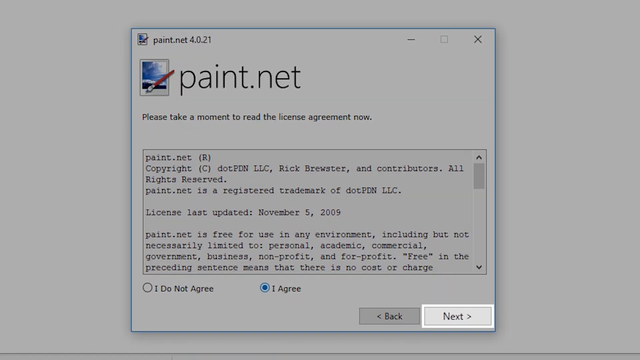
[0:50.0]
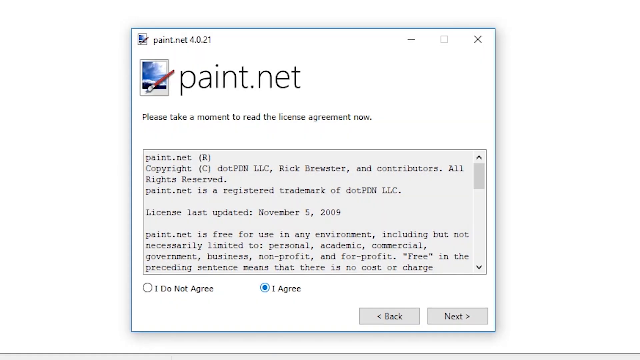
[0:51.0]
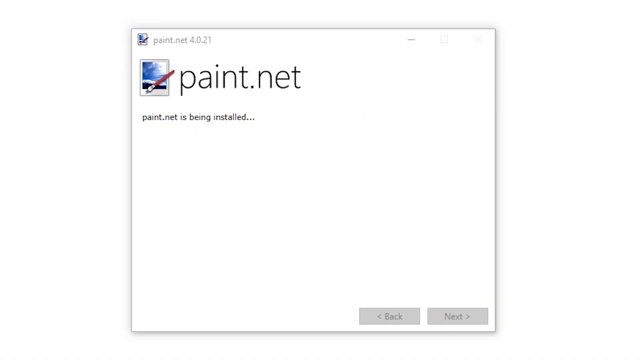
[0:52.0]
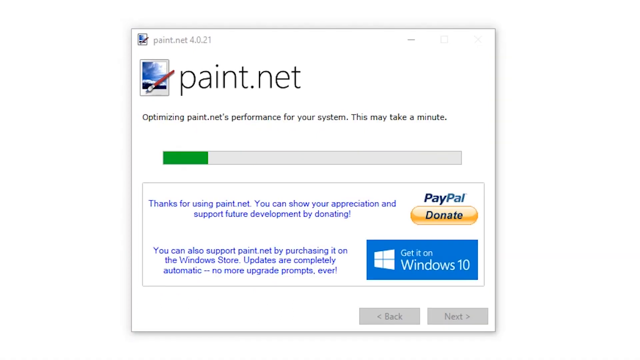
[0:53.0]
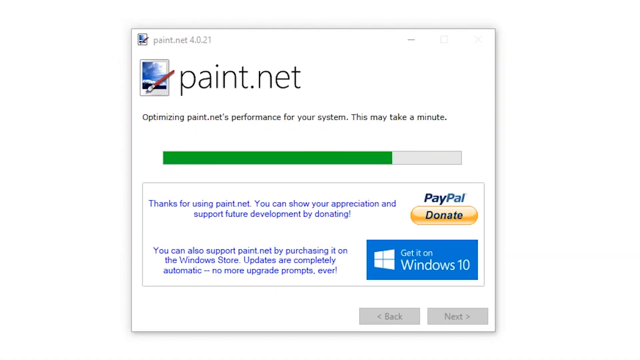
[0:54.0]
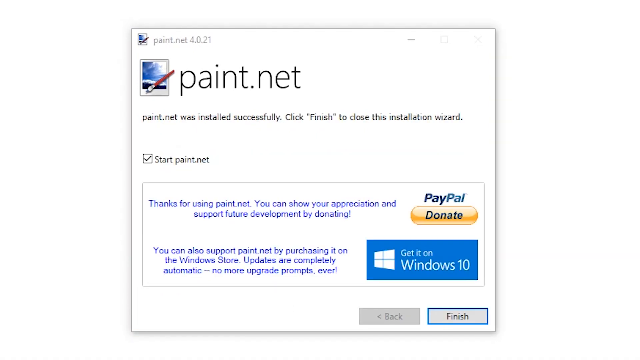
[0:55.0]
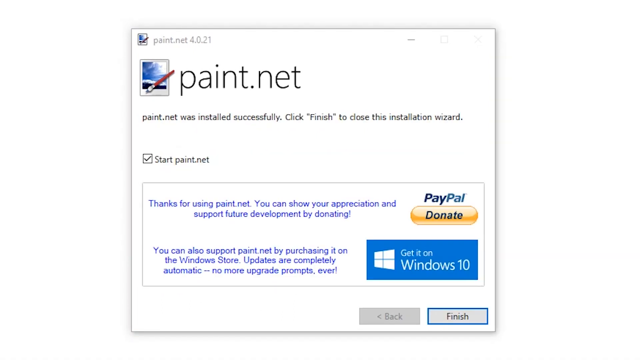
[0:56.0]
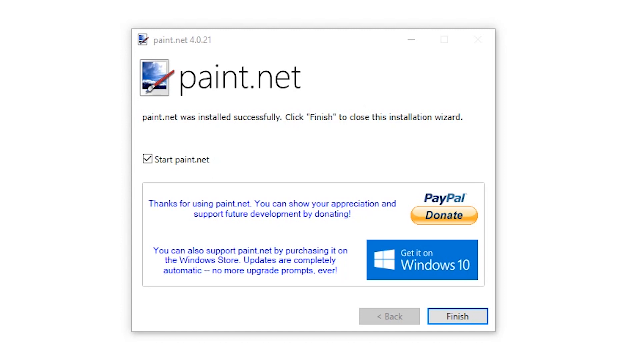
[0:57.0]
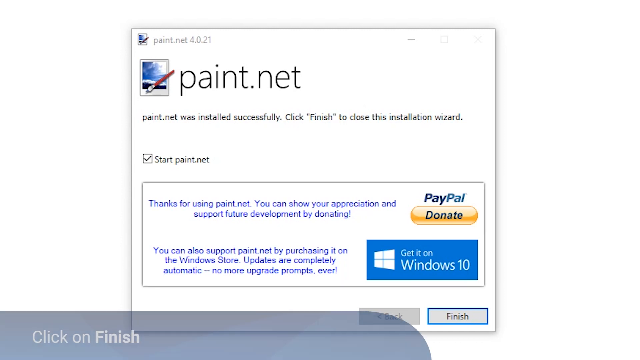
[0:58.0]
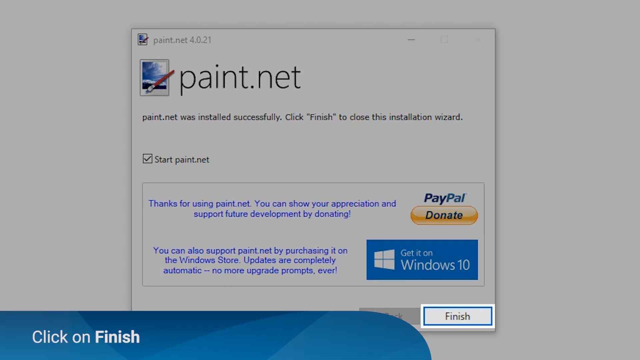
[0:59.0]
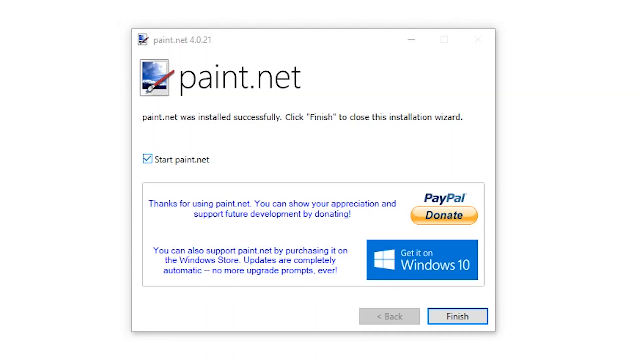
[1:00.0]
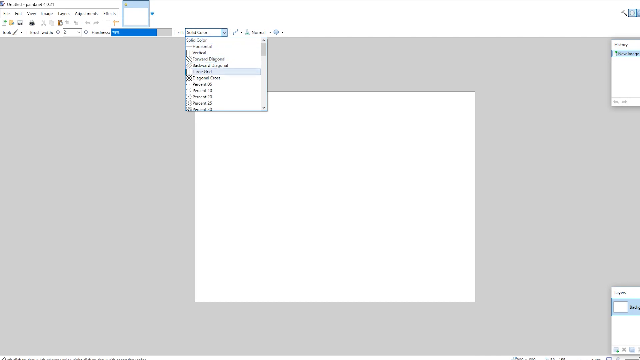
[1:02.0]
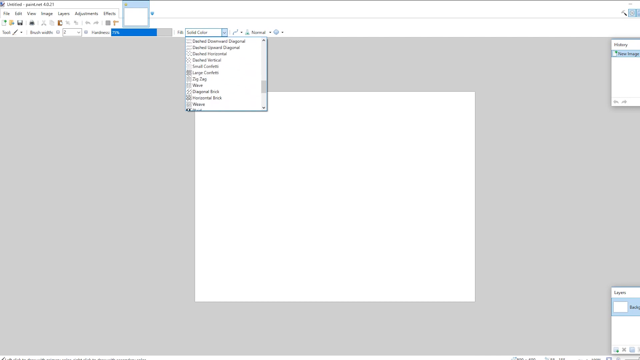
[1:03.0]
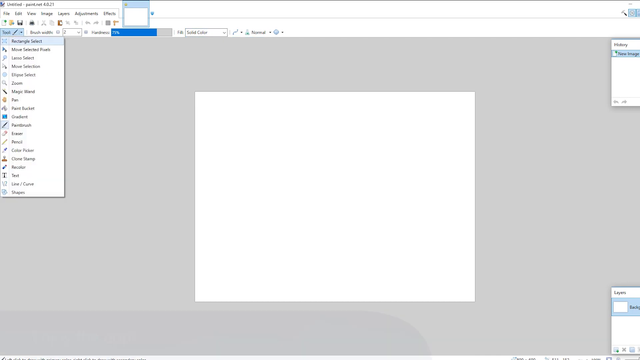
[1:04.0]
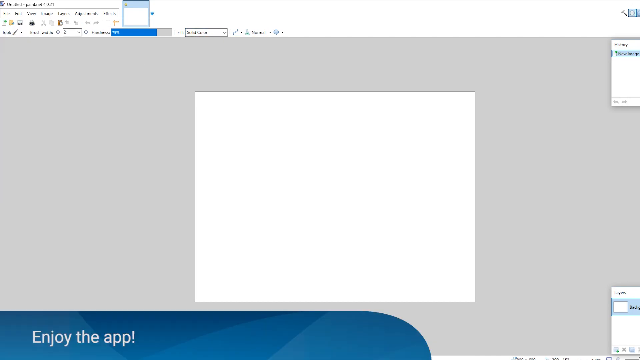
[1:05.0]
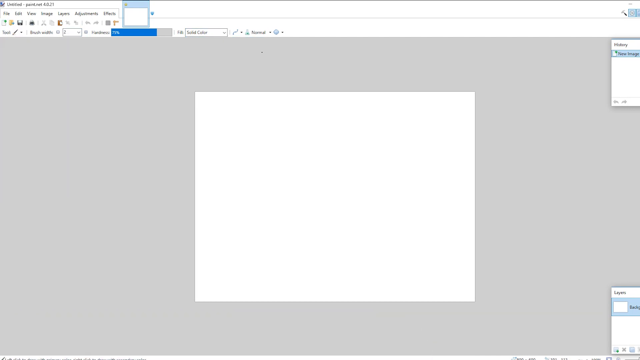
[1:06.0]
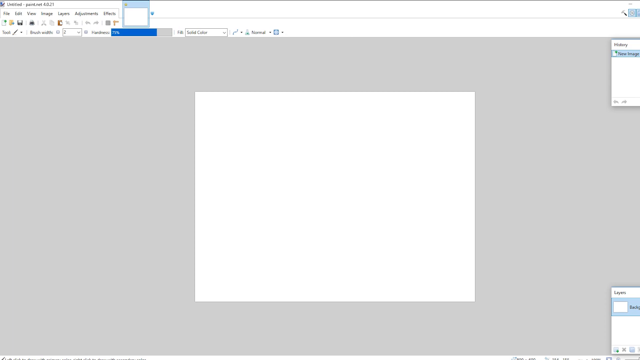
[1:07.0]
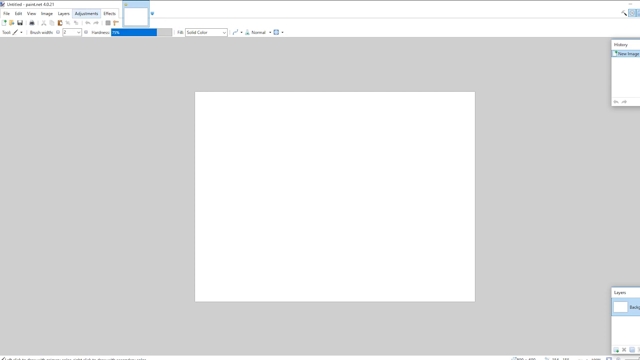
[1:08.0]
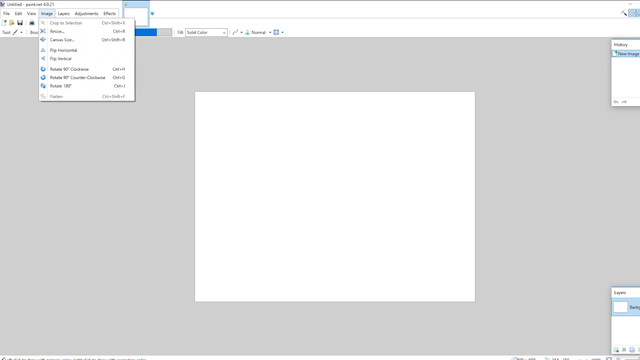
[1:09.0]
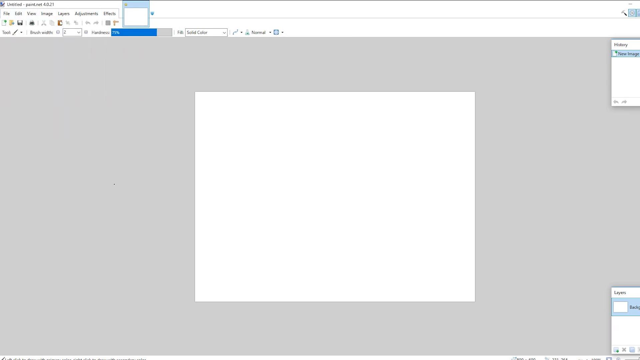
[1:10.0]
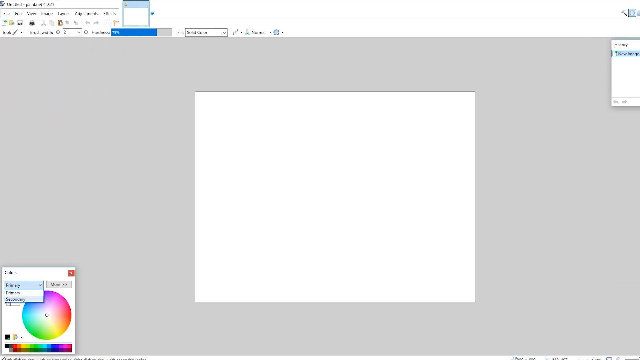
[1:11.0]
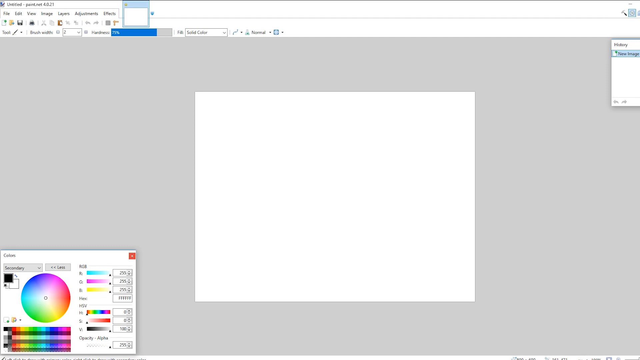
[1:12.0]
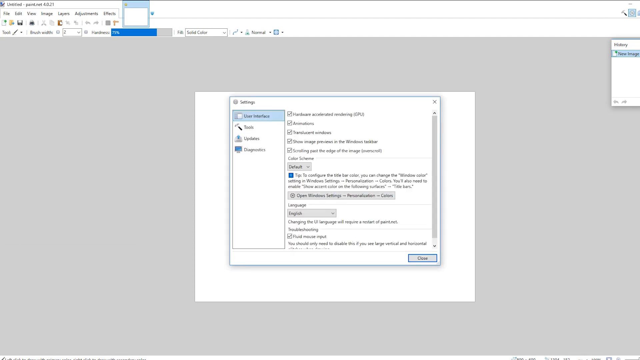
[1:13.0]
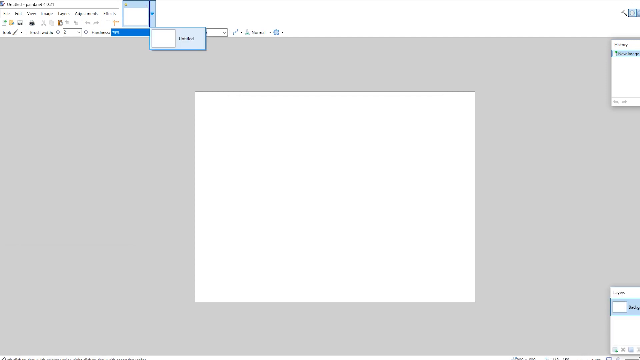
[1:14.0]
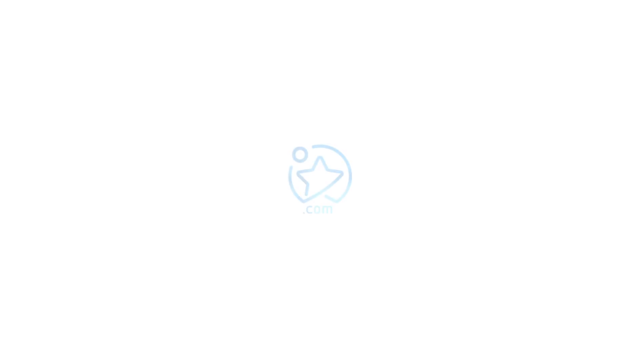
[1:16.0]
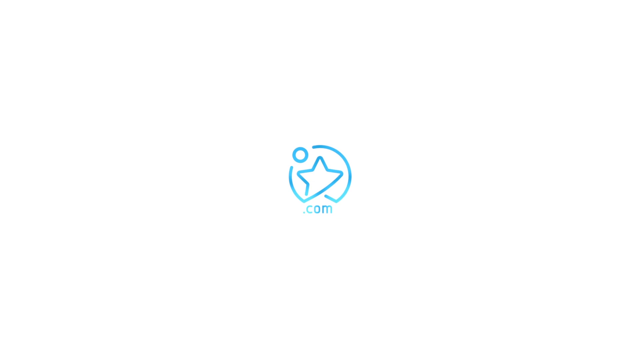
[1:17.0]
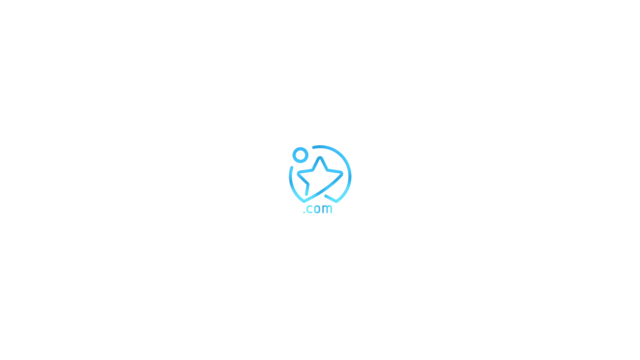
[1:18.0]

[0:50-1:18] The paint.net installation screen for paint.net 4.0.21 is shown. Minimise, maximise and close buttons are in the right-hand corner of the installation window, with the maximise button greyed out. The license agreement screen is still displayed, scrolled to the top, with the I agree radio button selected and the next button highlighted. The user clicks next, and an installation window appears with a progress bar that is green for the progress and grey for the rest. Below it are a thank you message, a donate to PayPal button and a get it on Windows 10 button. The progress bar quickly fills, and a screen then says the program has been installed successfully and to click finish to close the installation wizard, with a checkbox asking whether to start paint.net. The user clicks finish and the application loads. The user clicks the fill drop-down and scrolls through all of its options, then scrolls very rapidly through many of the application's menus. A colour picker and some other menu items are shown before the logo appears centred on a white screen, concluding the video.